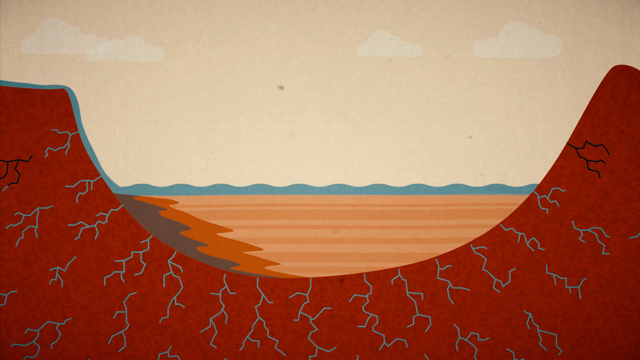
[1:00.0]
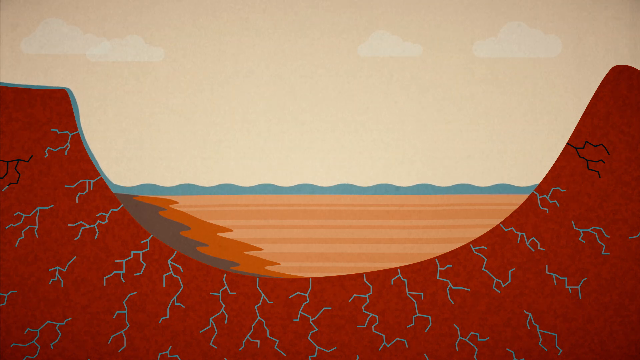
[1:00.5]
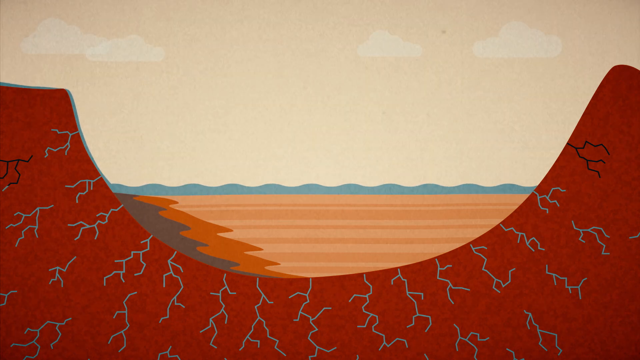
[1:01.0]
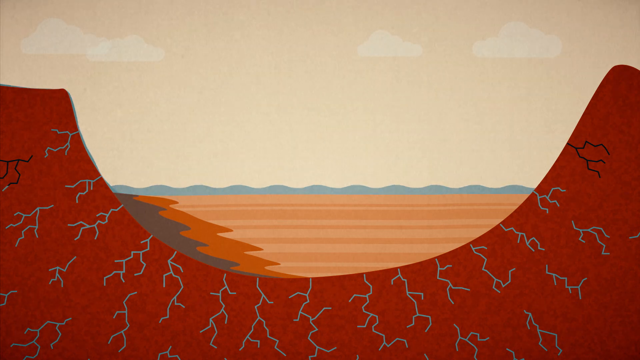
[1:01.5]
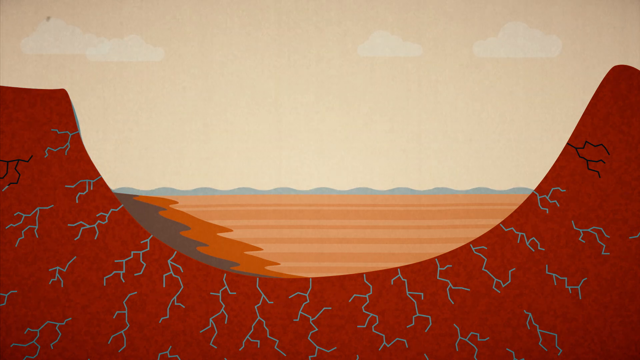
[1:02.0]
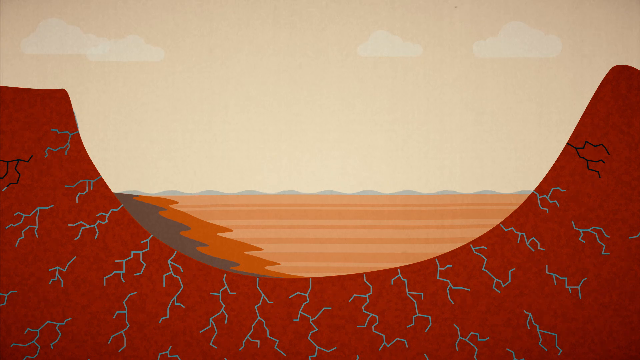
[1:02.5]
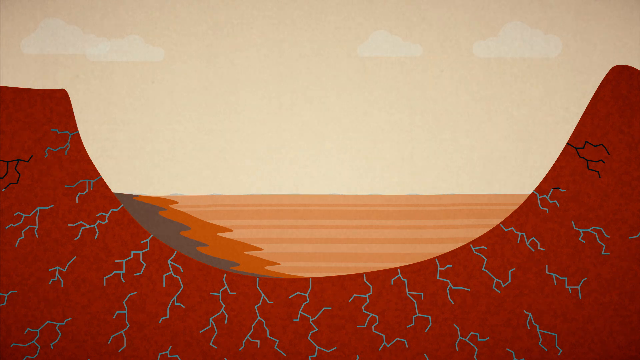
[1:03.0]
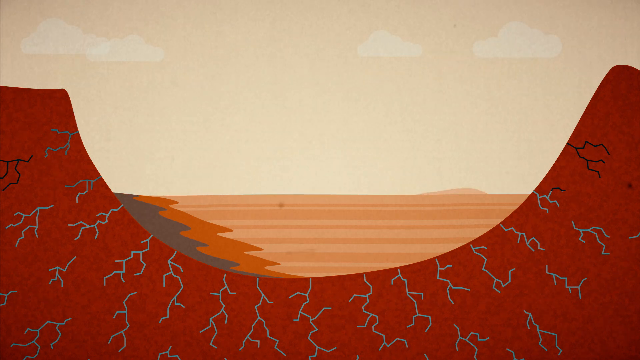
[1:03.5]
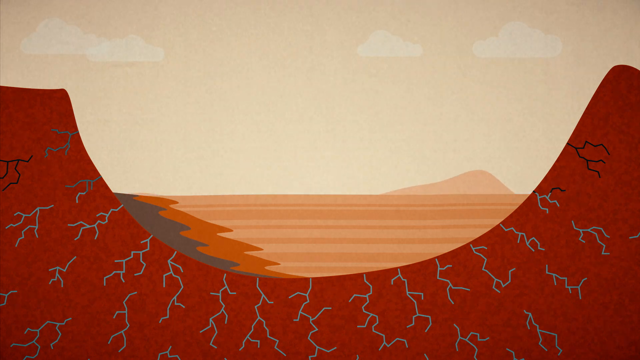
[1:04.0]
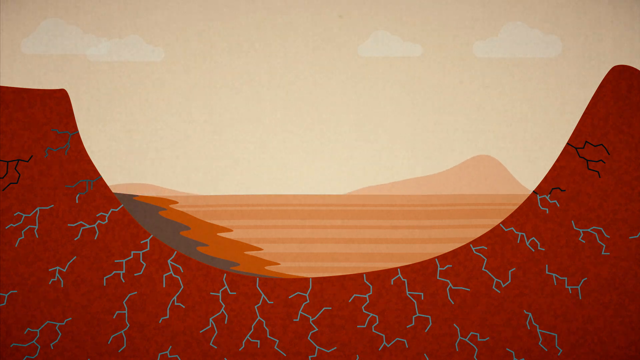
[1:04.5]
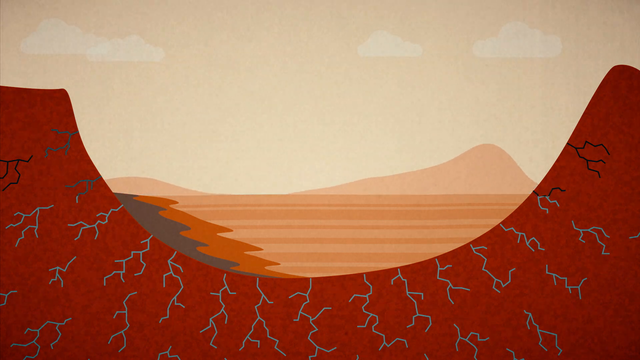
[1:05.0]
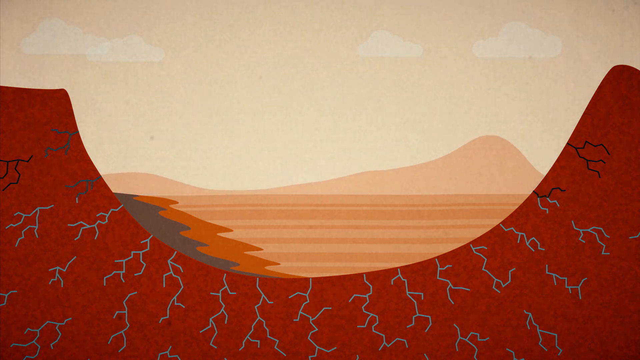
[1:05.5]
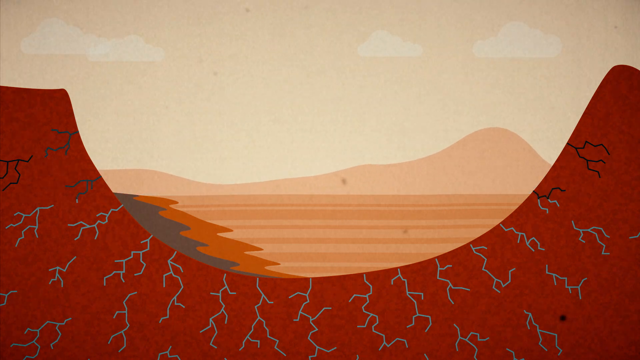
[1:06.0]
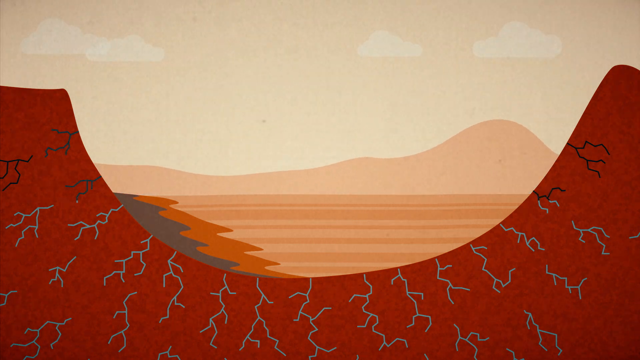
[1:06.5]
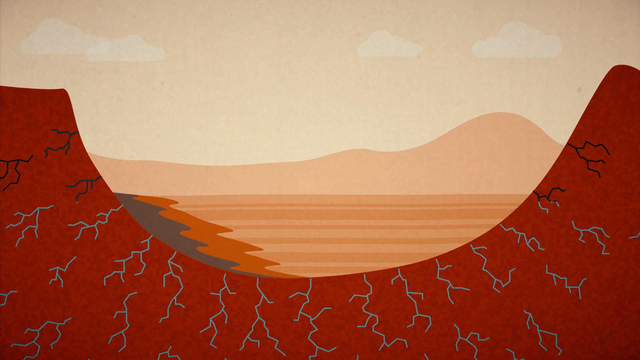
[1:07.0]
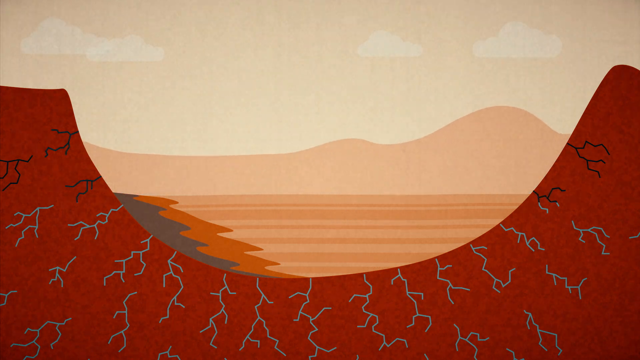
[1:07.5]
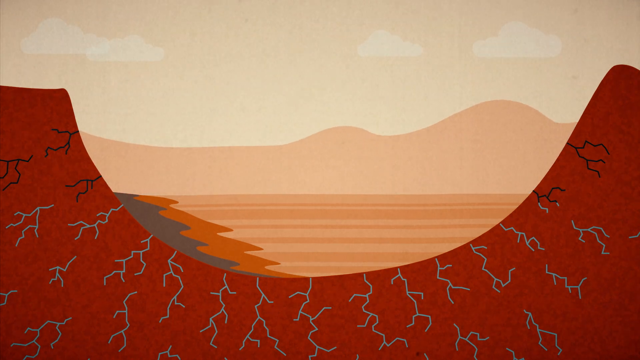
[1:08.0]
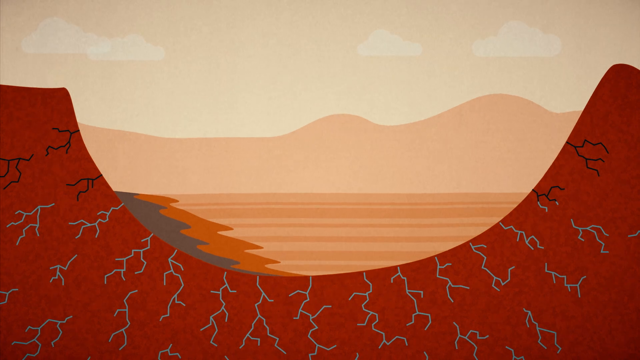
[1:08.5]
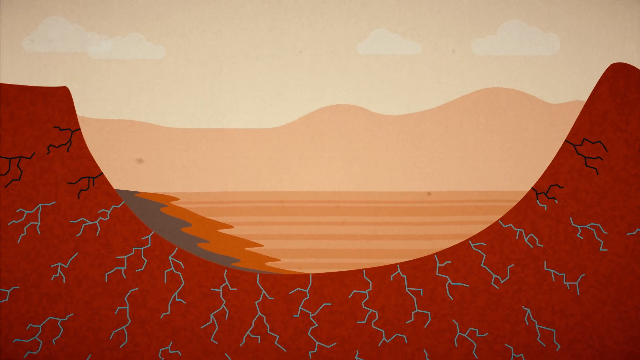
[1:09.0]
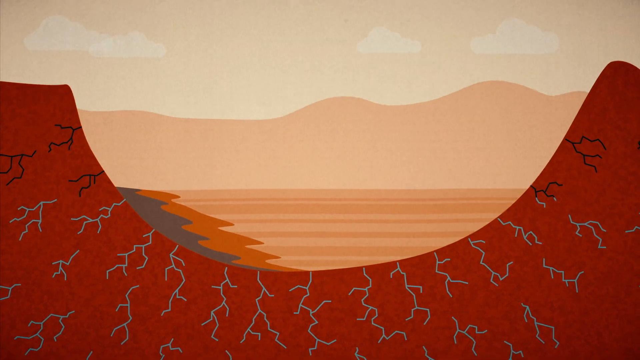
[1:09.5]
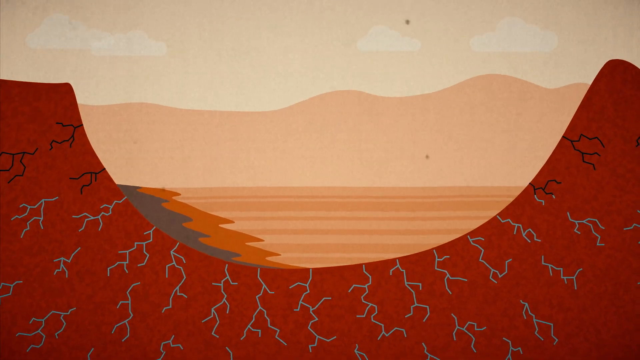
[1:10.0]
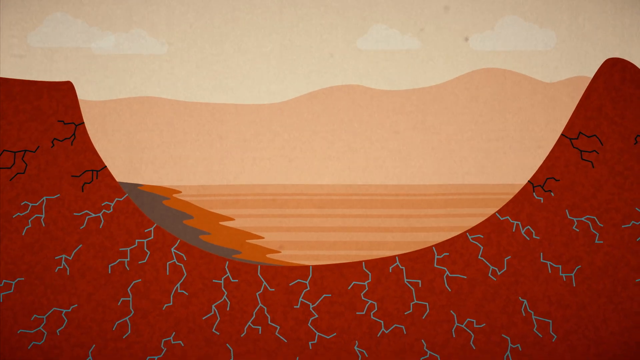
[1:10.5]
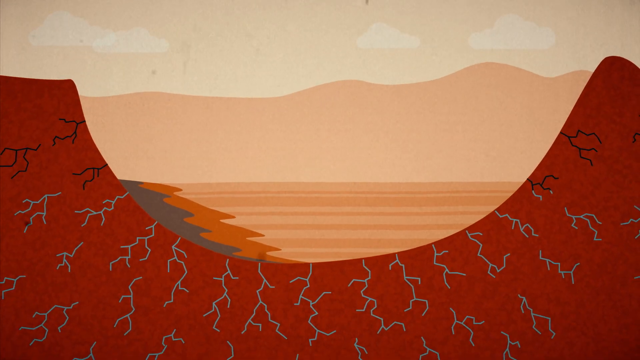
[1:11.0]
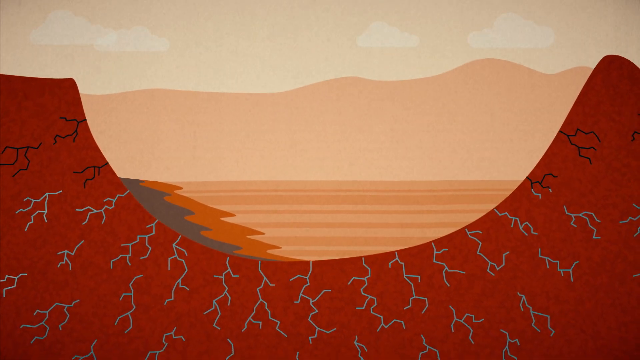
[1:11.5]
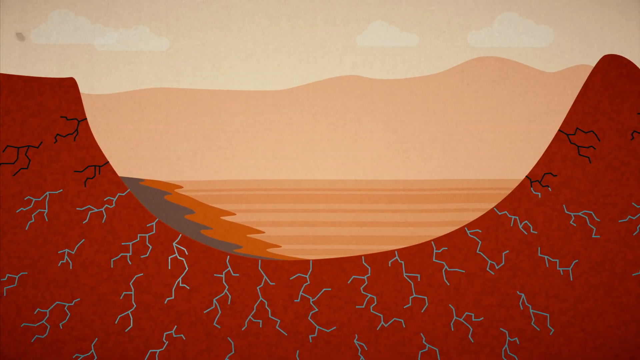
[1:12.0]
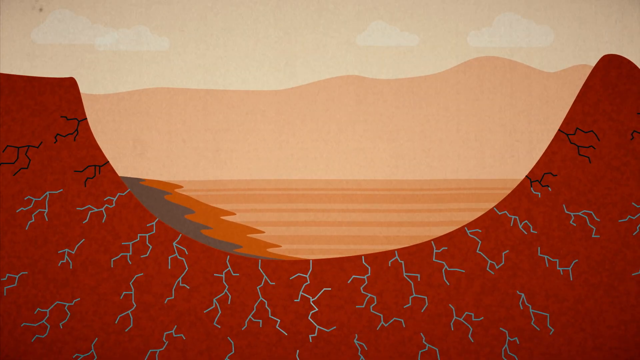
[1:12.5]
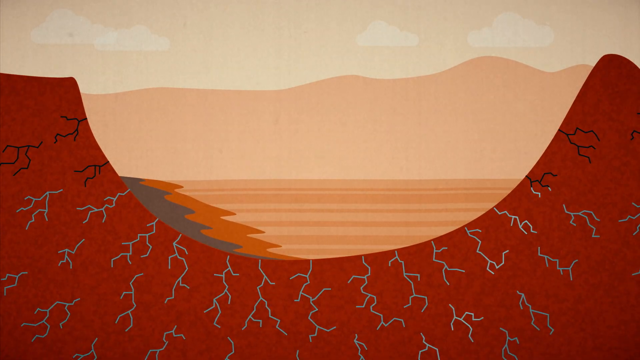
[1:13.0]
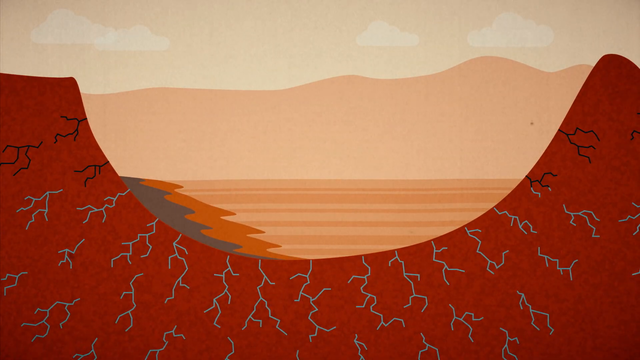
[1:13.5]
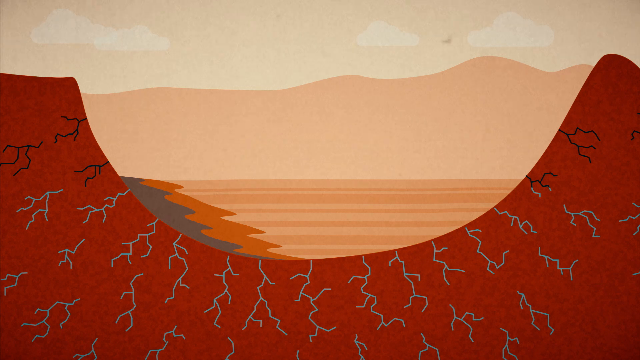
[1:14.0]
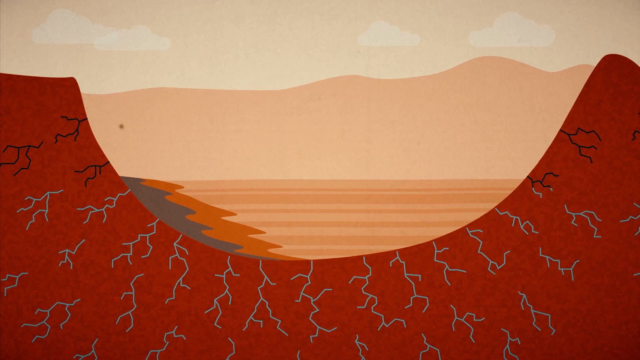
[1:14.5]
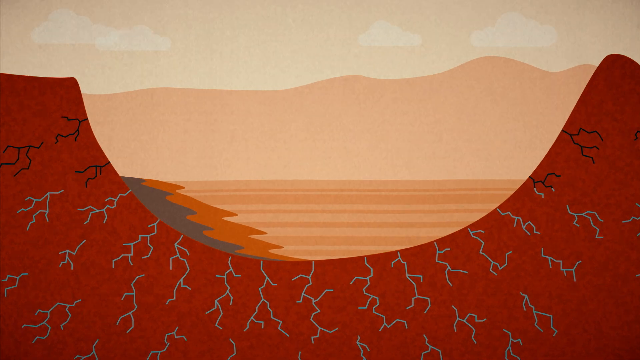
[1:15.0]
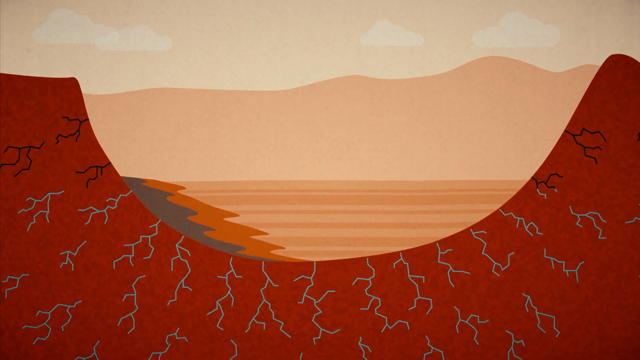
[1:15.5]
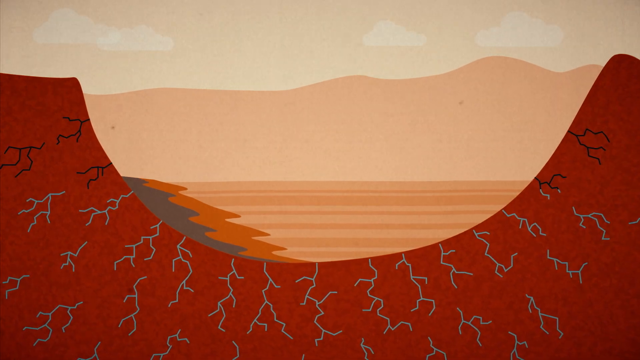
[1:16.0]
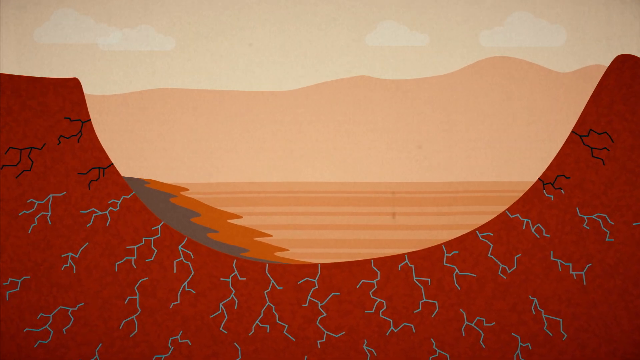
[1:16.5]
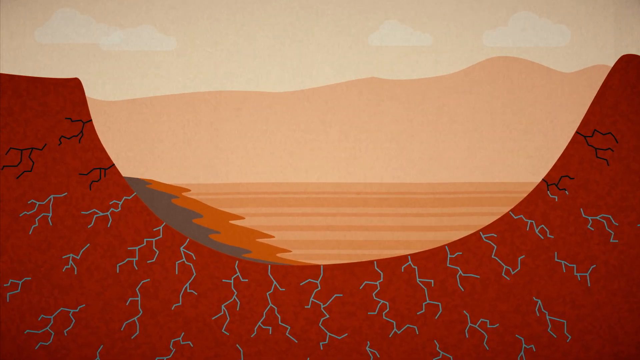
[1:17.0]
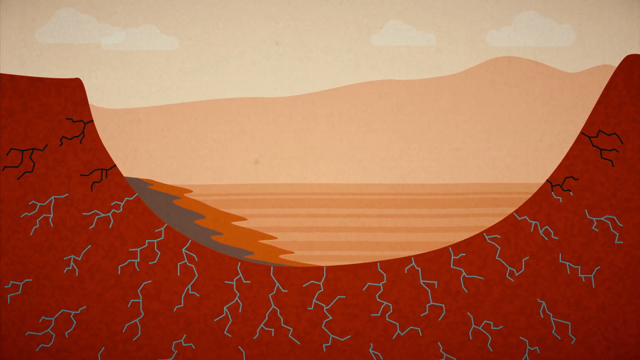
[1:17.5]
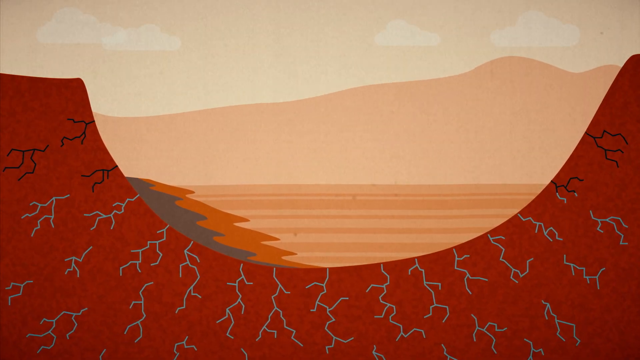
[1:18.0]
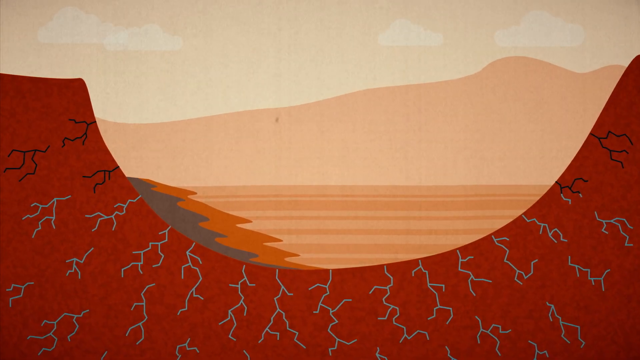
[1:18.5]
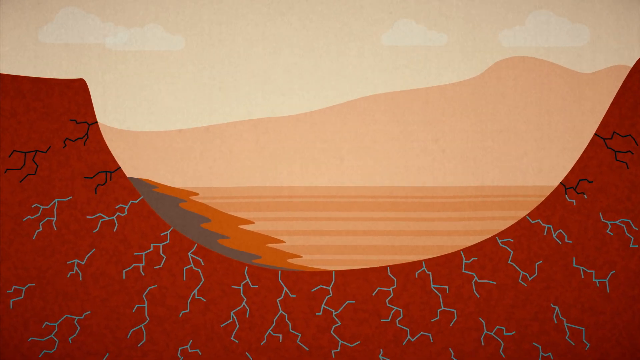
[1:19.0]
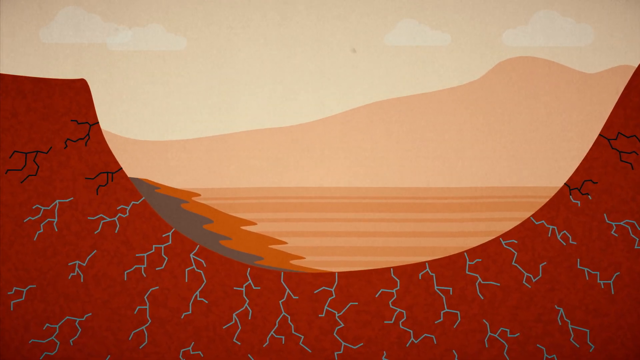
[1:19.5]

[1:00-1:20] The animation continues, showing the layers of sediment and brown tones that the water formed as its level increased inside the crater. The water level then recedes and goes away completely. In its place, large sand dunes or perhaps mountainous regions form; they appear light brown and show a gradation at the top. Apparently a time-lapse, the mountainous region in the background grows and changes shape, getting larger and then kind of tapering off a little, particularly on the left side, which sort of droops in, almost appearing to collapse under its own weight. The color tones are reds and browns, with some grays.